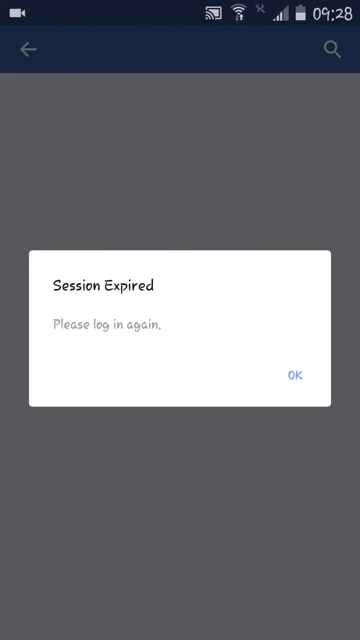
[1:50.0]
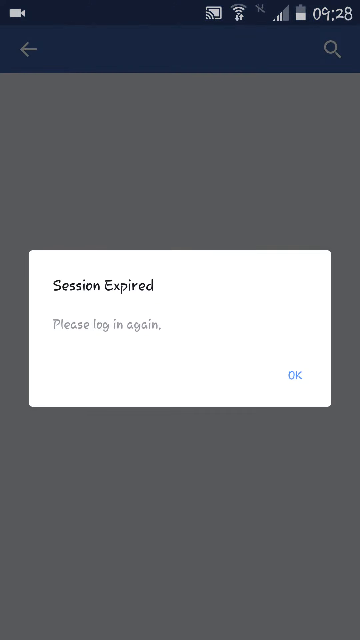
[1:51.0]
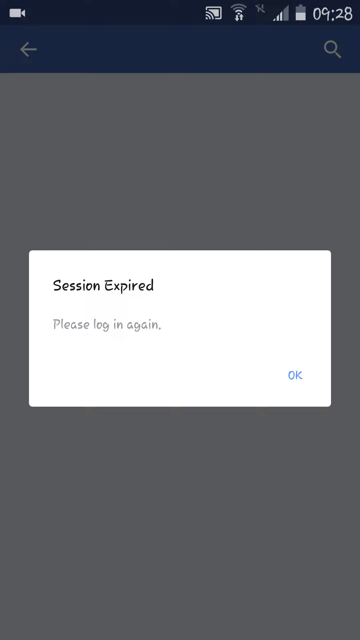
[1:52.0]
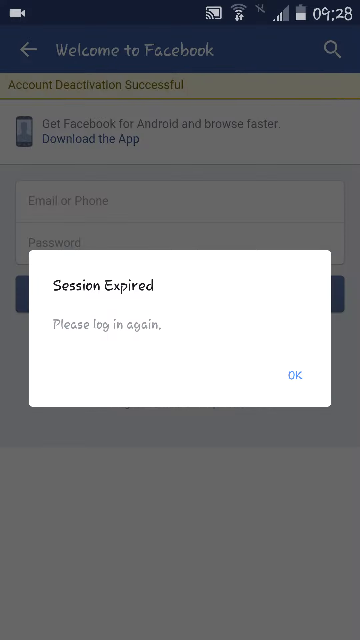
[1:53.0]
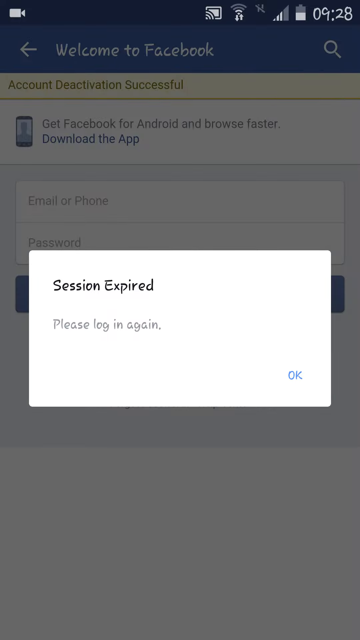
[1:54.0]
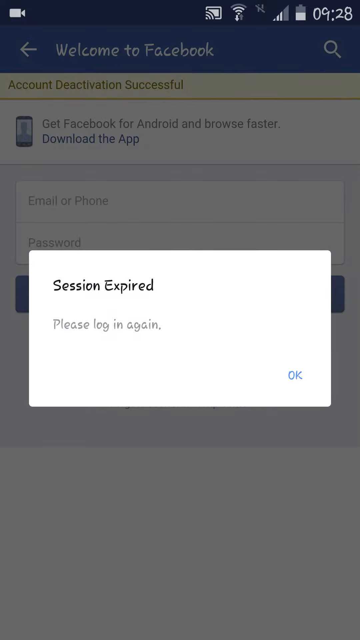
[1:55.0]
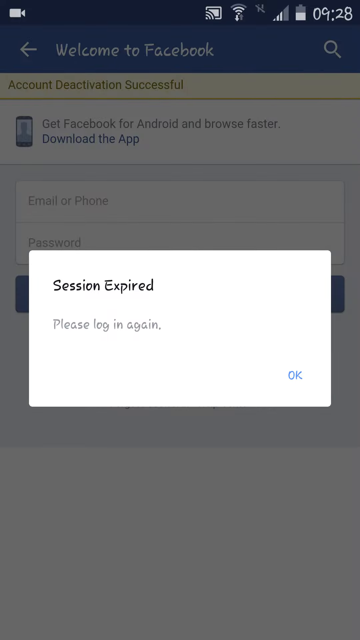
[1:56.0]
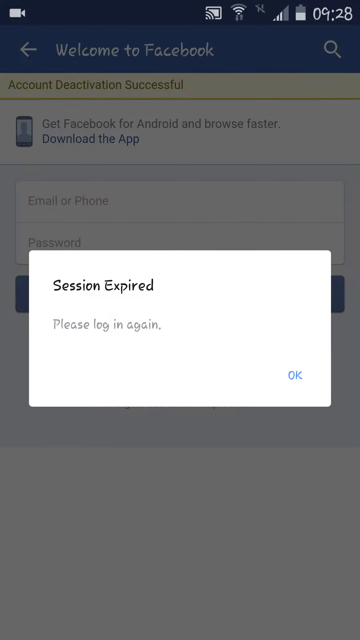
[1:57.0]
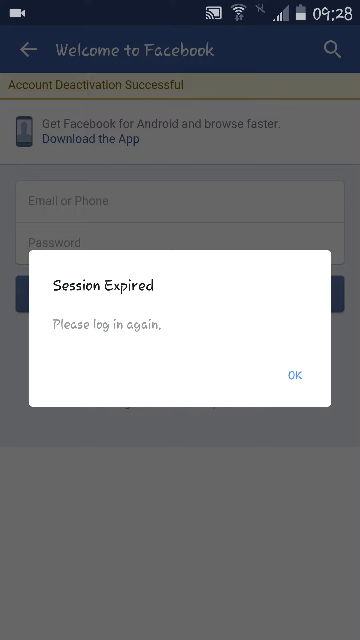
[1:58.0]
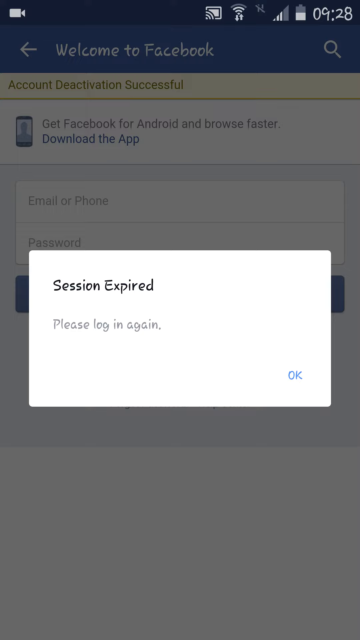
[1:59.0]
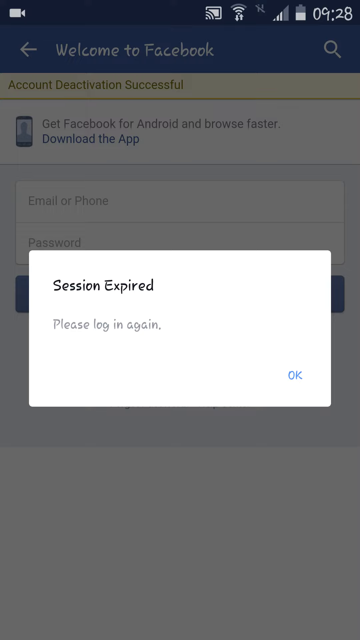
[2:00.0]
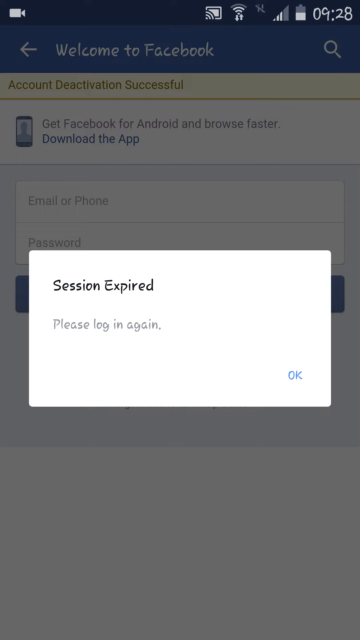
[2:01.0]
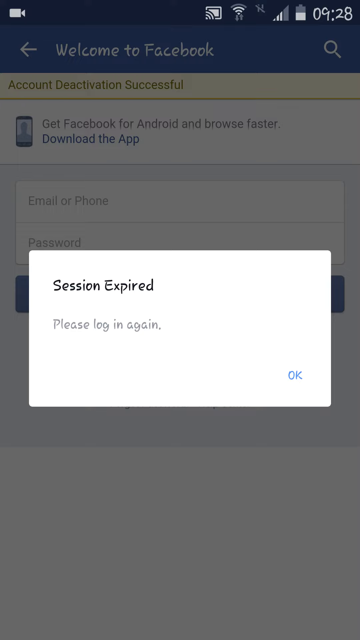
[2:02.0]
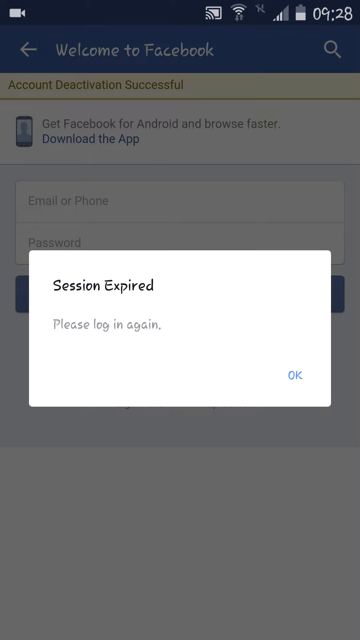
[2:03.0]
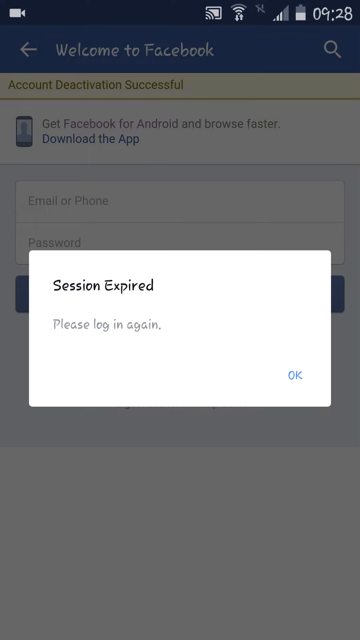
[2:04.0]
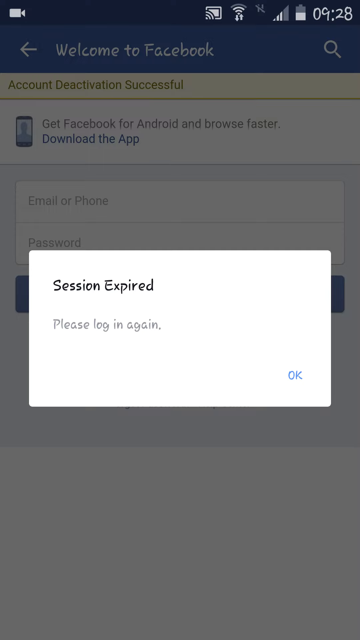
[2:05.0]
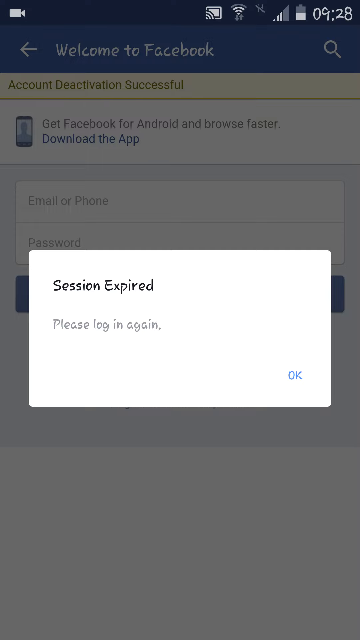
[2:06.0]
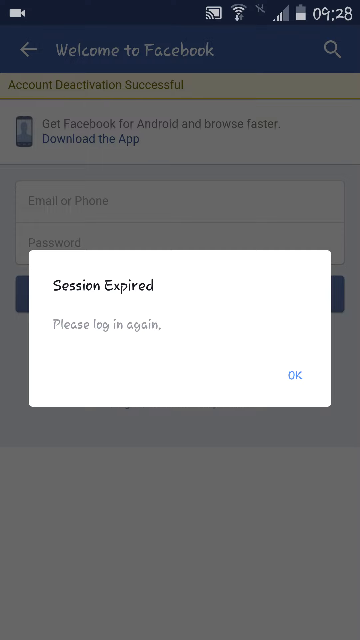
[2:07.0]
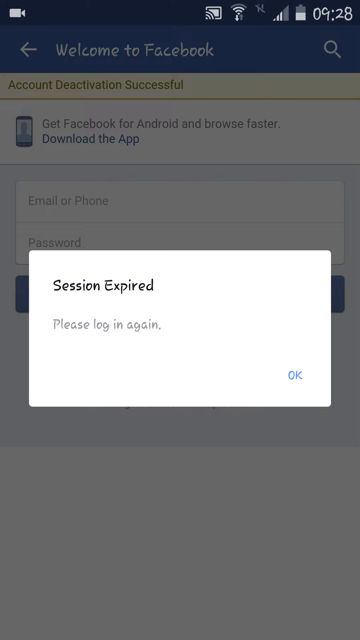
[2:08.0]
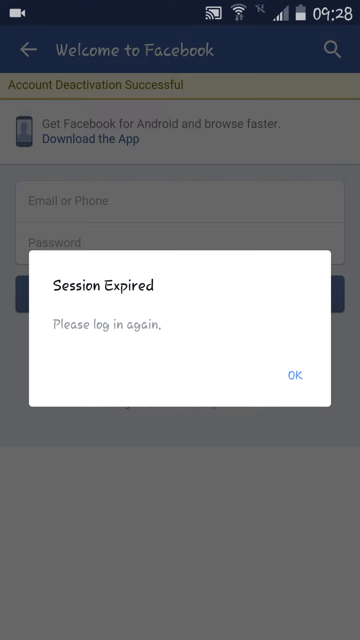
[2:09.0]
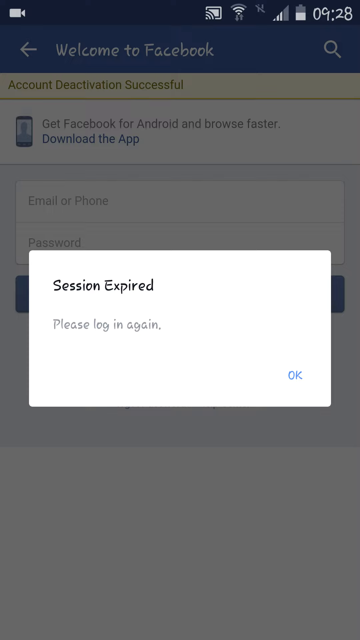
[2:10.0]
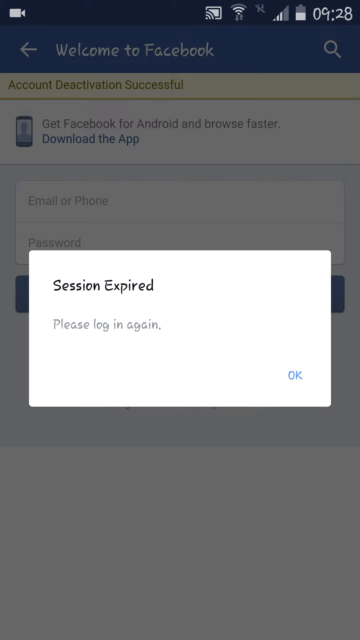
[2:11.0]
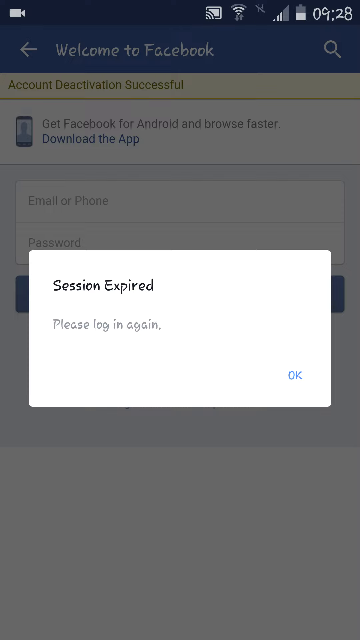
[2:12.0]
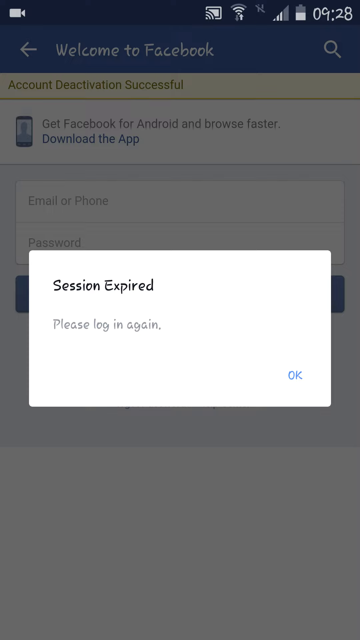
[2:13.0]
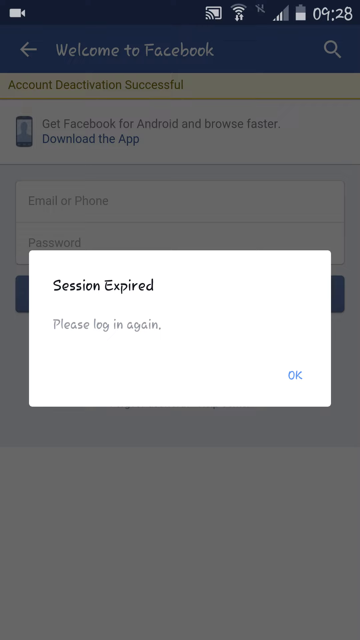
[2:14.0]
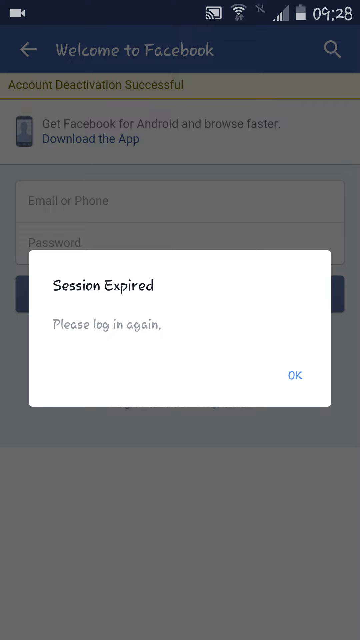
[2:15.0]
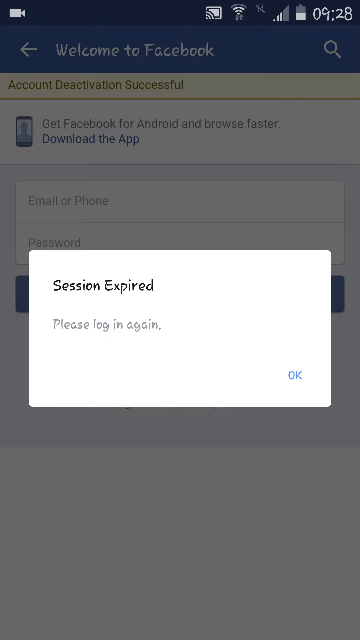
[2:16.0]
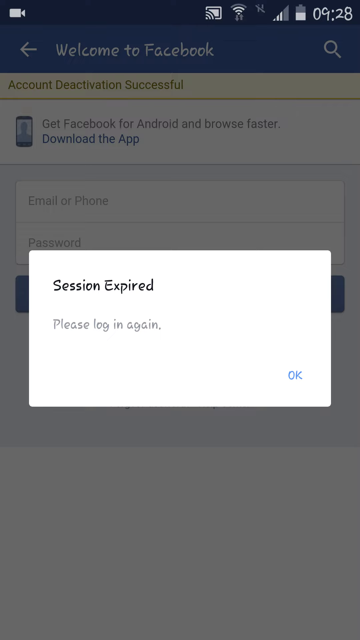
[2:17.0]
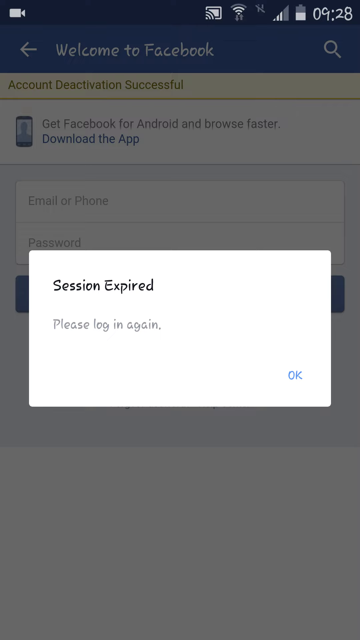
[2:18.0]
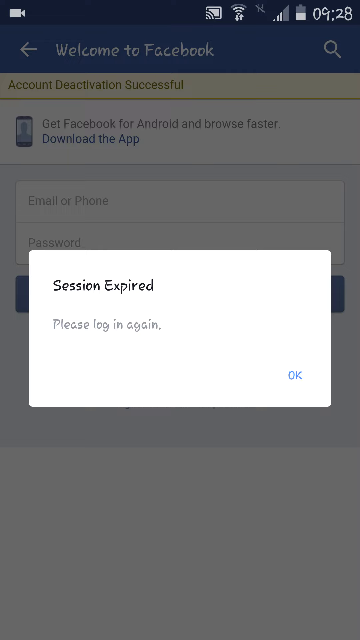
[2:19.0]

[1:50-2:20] On a cell phone, during an attempt to deactivate a Facebook account, a large block on the screen says "session expired please log in again" with an "okay" button in the bottom right corner, and the rest of the screen is kind of grayed out. The screen then changes: at the top it says "welcome to Facebook", beneath that "account deactivation successful", then "get Facebook for Android and browse faster download the app", followed by fields for email or phone and password, so it looks like a Facebook login screen. The session expired message remains in the center with the okay button in its bottom right corner, and the video stays on this screen for a while. In the top right corner the time is 9:28, with a battery status bar, a Wi-Fi signal bar and a cell phone signal bar; there is a camera option in the top left corner and a magnifying glass for search at the top.